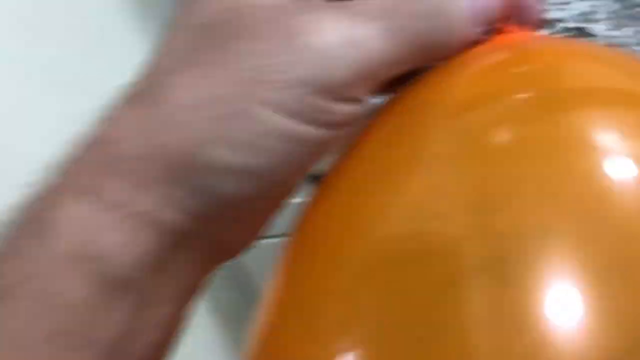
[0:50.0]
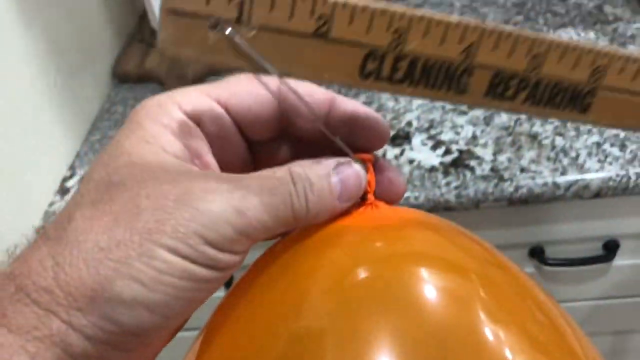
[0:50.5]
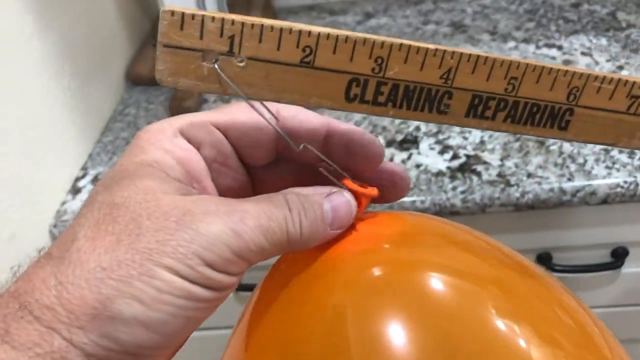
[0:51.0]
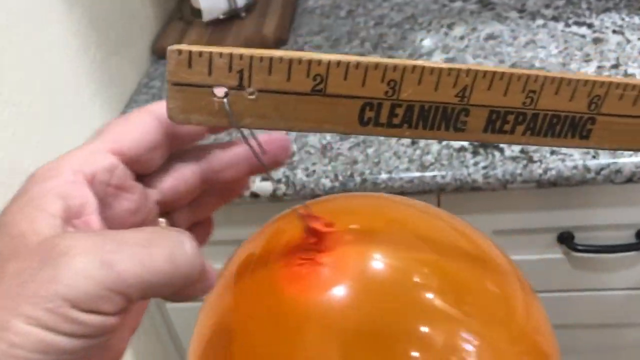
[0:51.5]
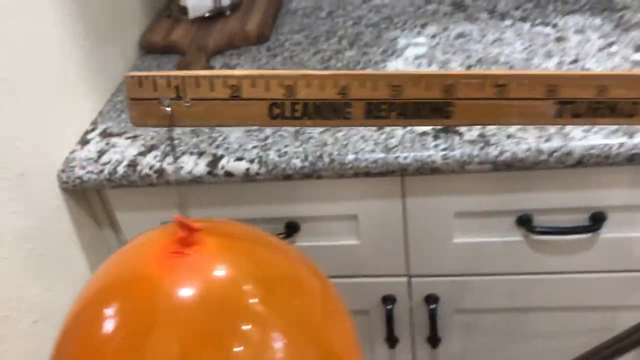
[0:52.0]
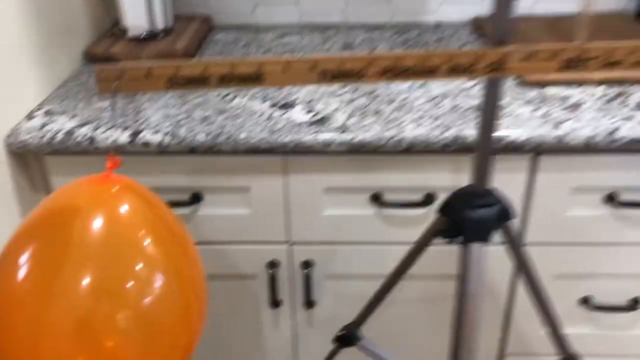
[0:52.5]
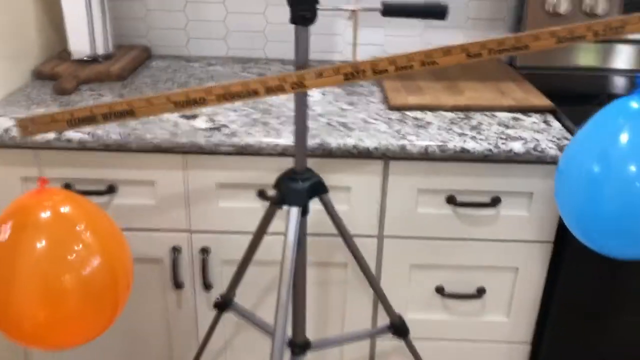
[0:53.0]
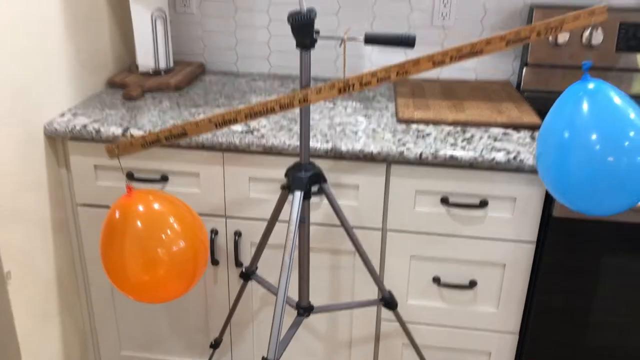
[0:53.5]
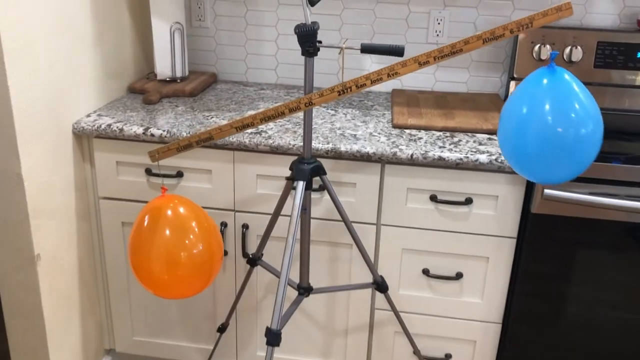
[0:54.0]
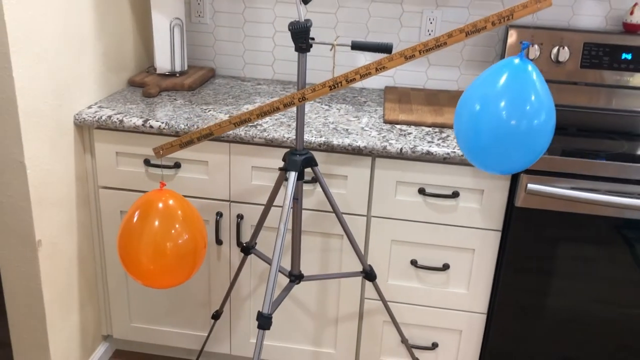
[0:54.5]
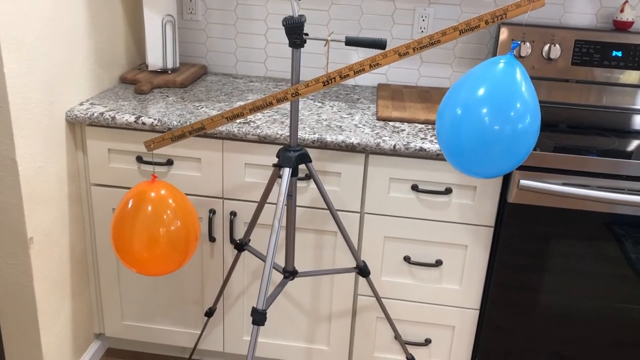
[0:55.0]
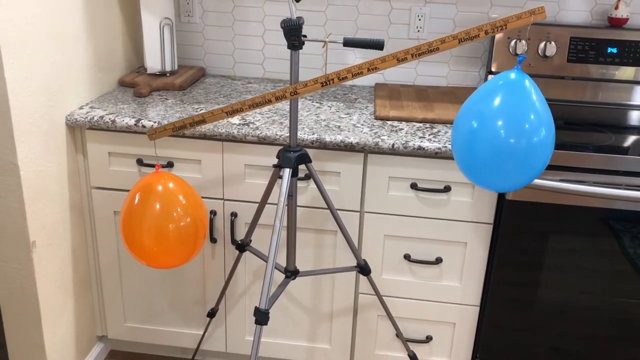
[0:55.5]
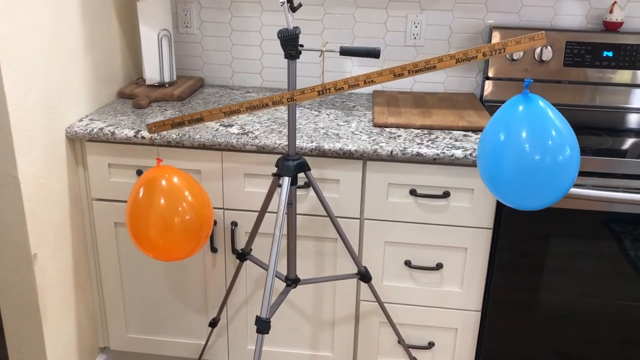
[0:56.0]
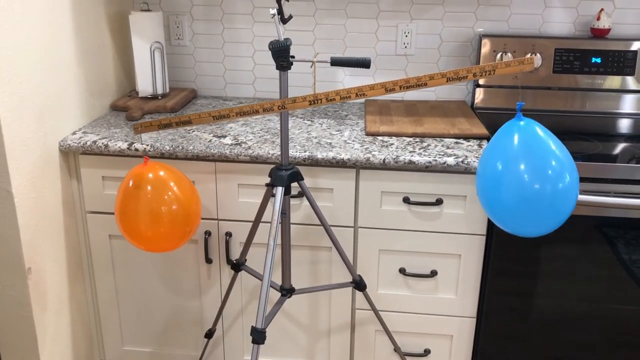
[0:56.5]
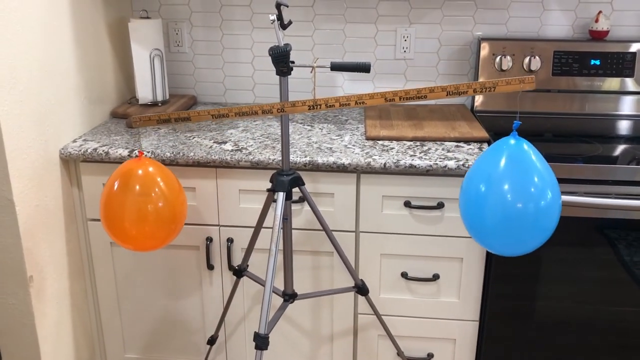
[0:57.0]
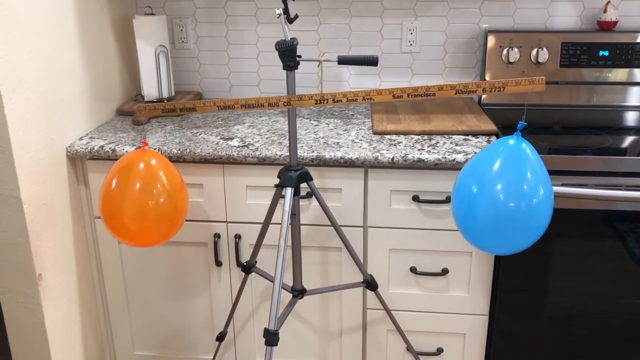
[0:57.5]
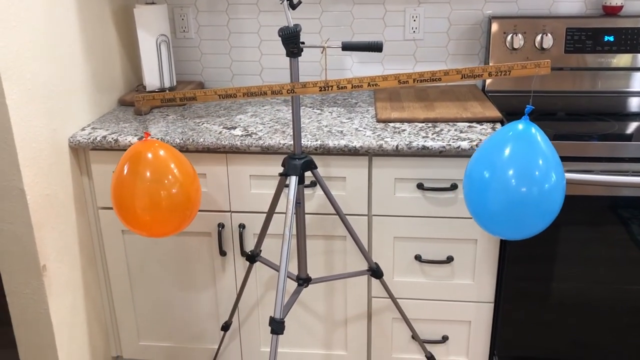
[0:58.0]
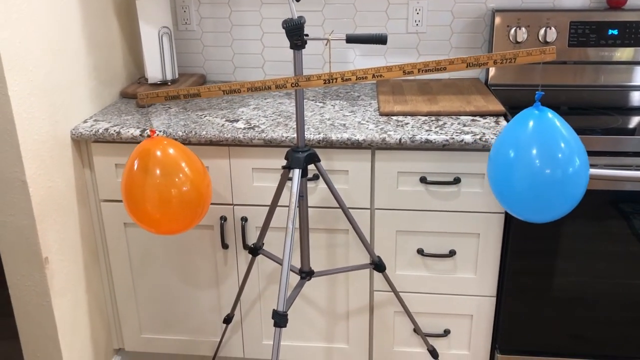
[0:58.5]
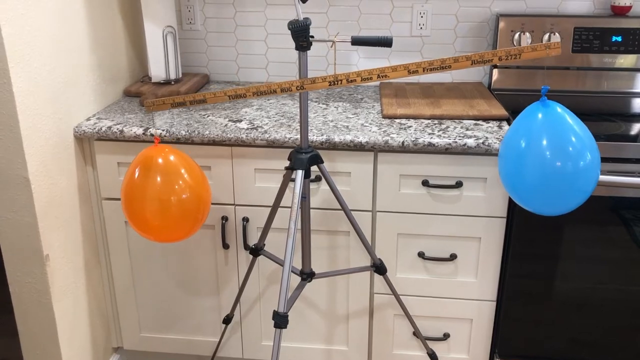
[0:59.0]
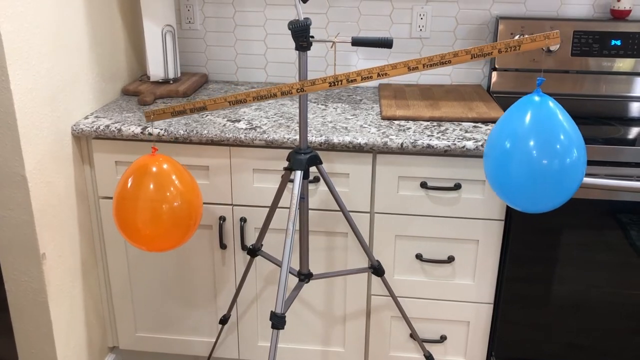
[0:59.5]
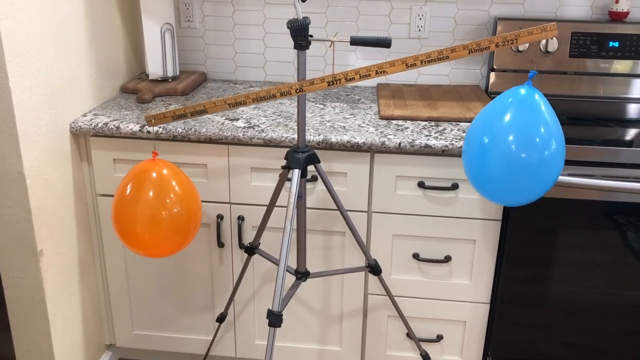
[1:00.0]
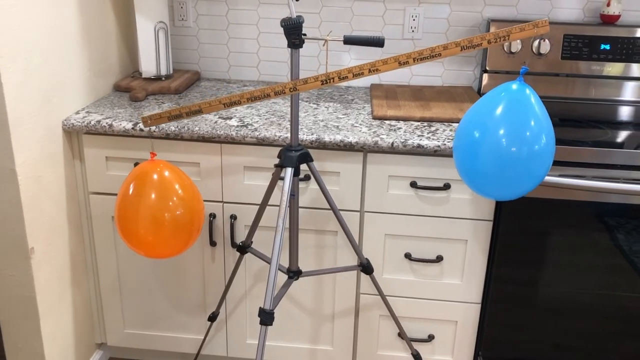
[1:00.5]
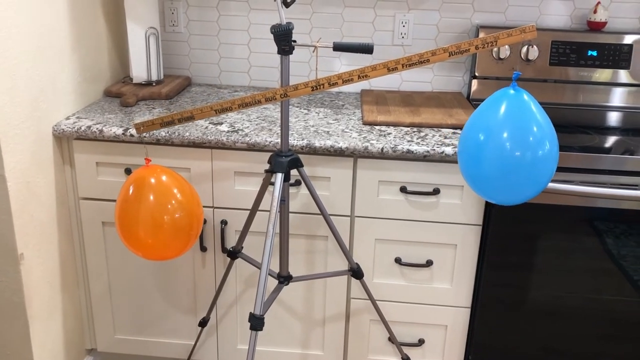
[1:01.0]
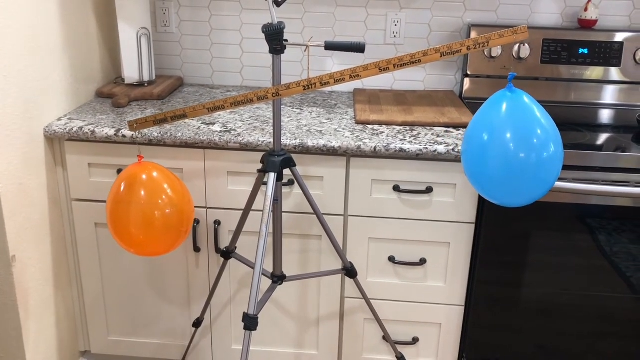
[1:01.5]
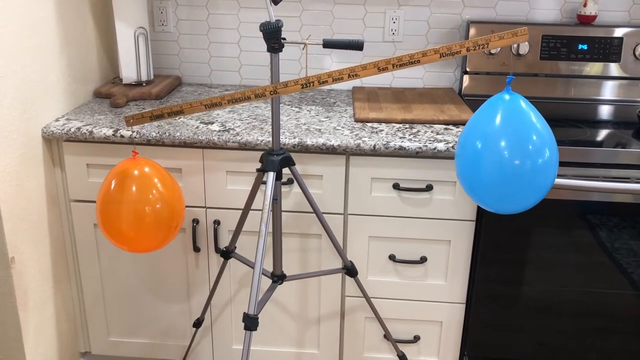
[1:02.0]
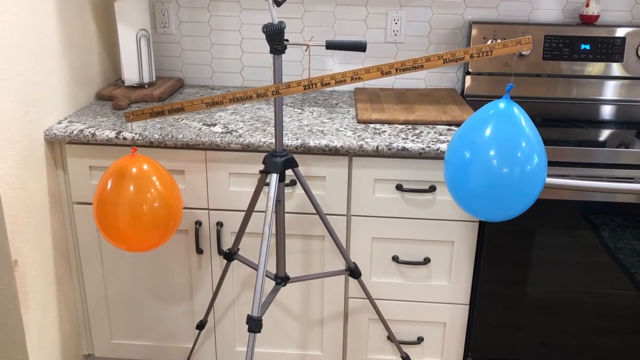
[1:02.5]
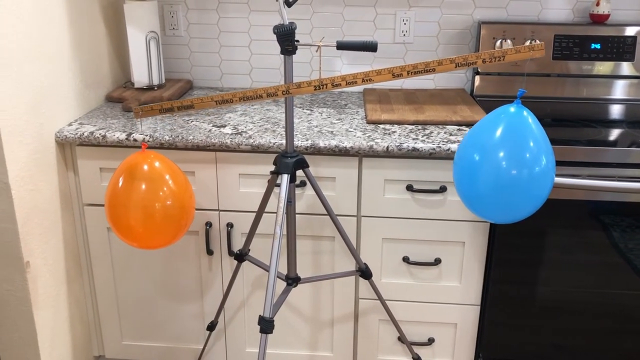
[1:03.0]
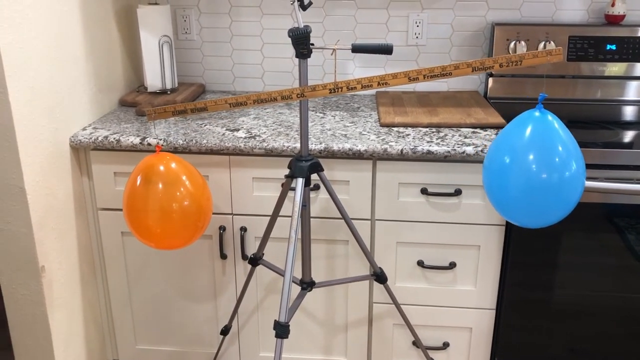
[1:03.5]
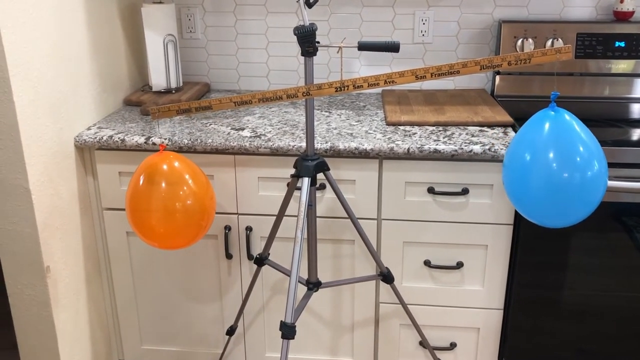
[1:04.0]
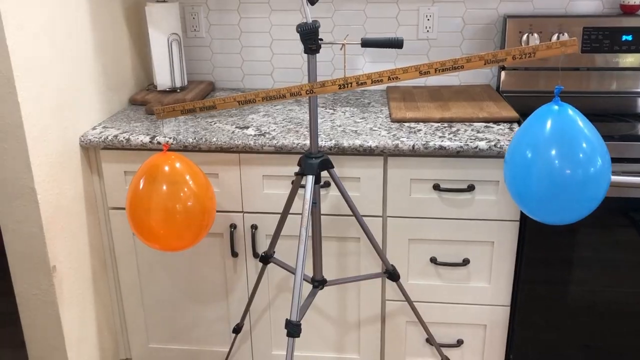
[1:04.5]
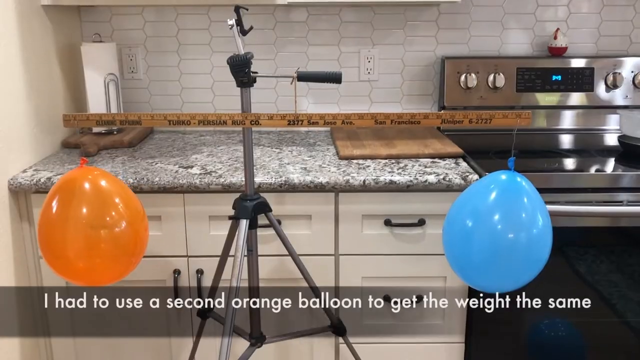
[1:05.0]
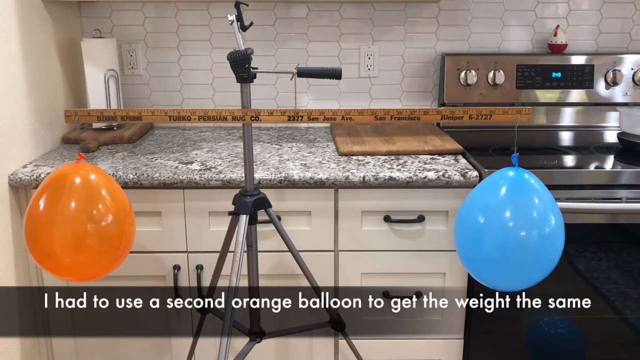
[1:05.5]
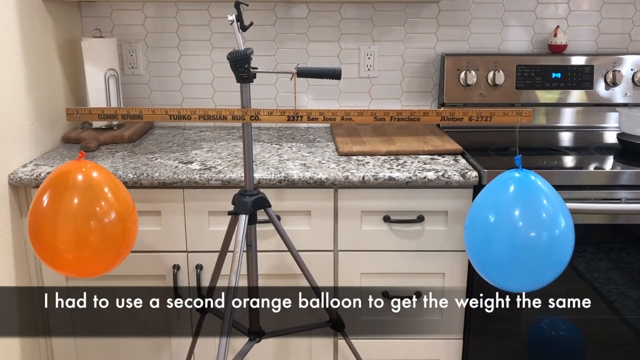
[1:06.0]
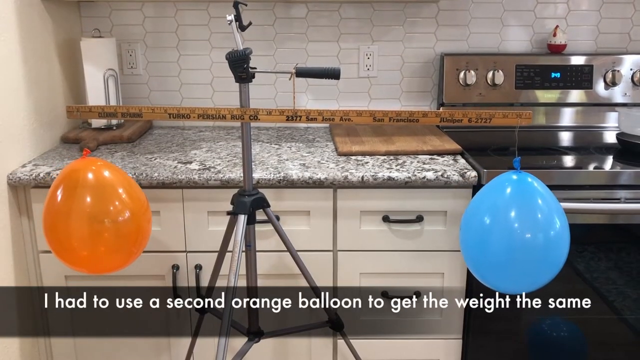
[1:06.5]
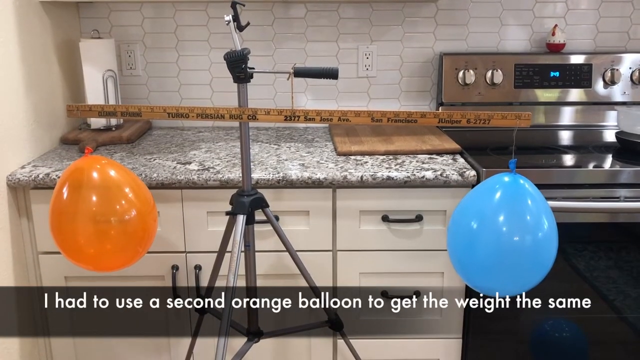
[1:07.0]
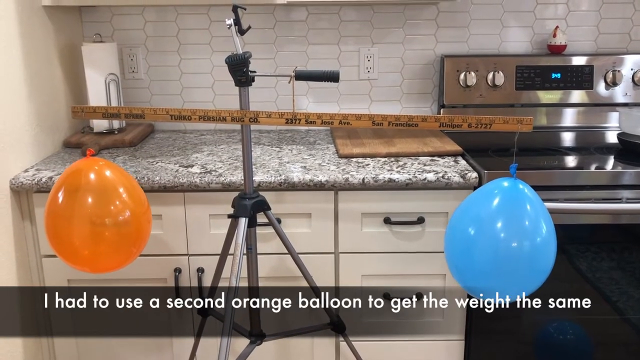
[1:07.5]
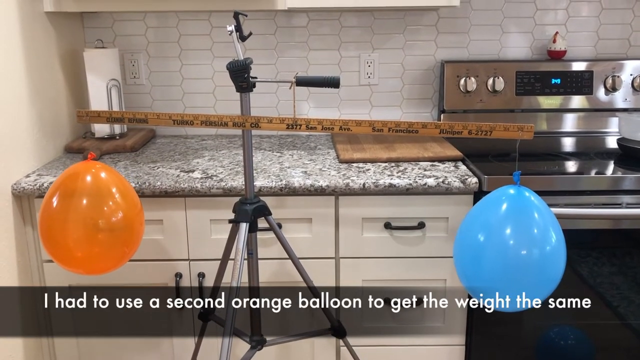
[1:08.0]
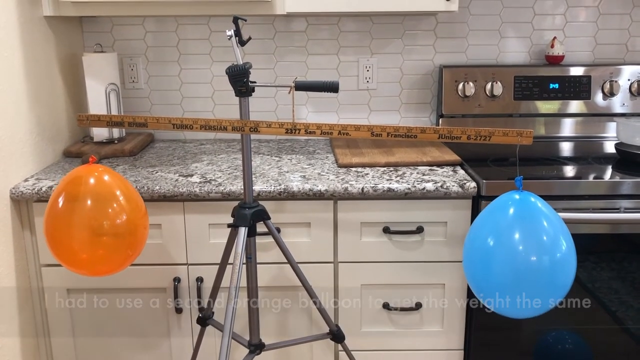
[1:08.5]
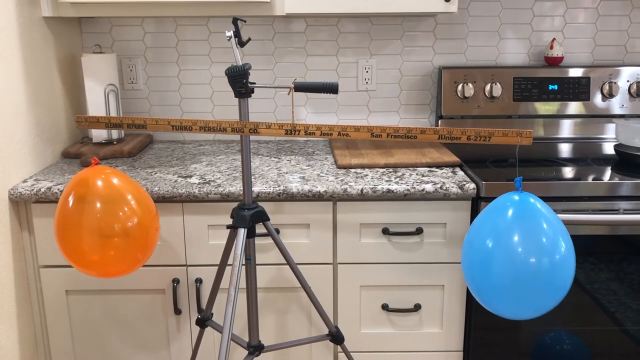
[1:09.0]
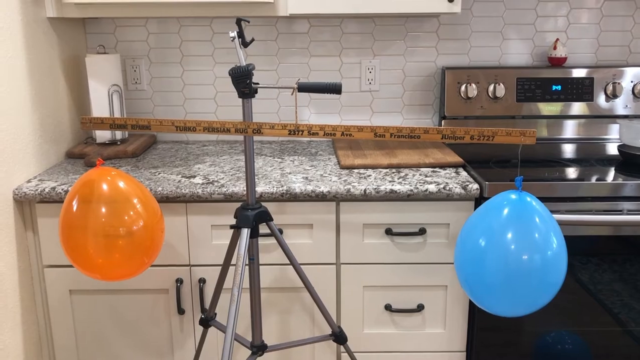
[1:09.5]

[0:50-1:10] On the right side, the orange balloon is very close up, with a little of the side of the wrist toward the camera and the back of the thumb visible. As the balloon is attached to the paperclip, the view moves up to show the side of the pointer finger and the ring finger. The hole is just left of the number one. The marble counter is behind the ruler, which has numbers on the top, and under them, between three and six, it says "cleaning, repairing." With the orange balloon set, they move back, and the left side drops all the way down as the right side moves up. The right side comes back down, the left side goes back down a little, and the right side comes back down to try to balance it out. At the back left of the marble counter against the wall, there is a paper towel holder to the right of it. A power plug is on the right side of the counter, about the midway point of the screen, and there is a cutting board with a white socket above it, with the stove to the right. In front of the countertop are three white drawers with three doors below them. The balloons become pretty much balanced and level, then the right side goes down just a little more than the left.